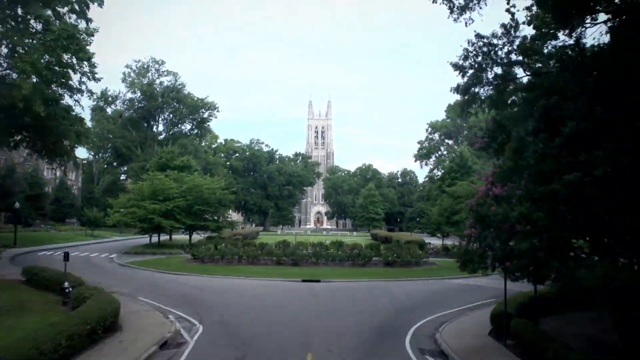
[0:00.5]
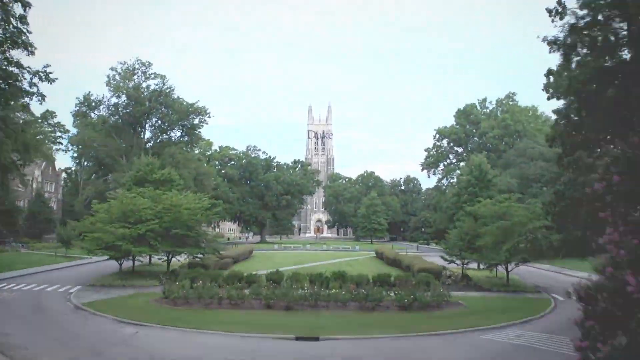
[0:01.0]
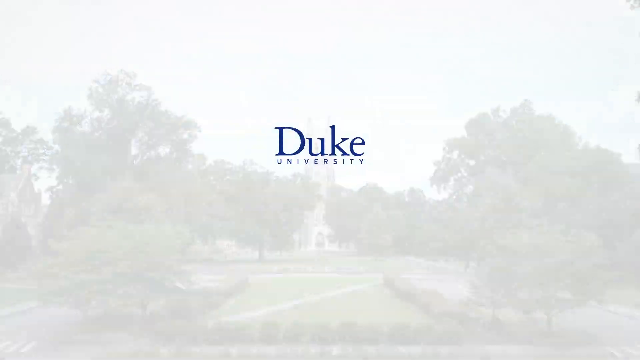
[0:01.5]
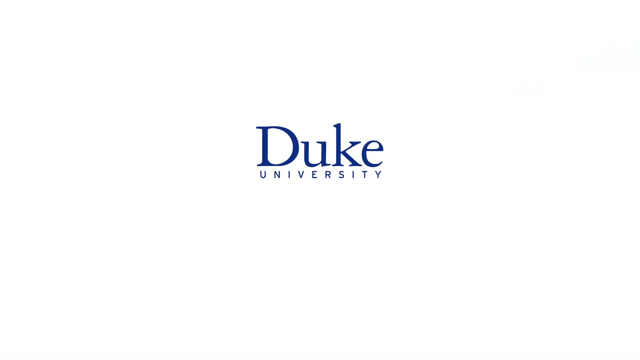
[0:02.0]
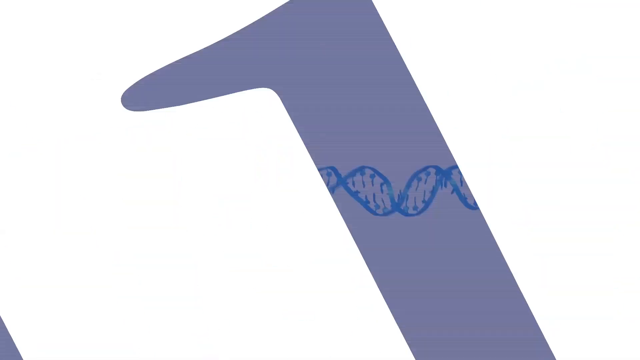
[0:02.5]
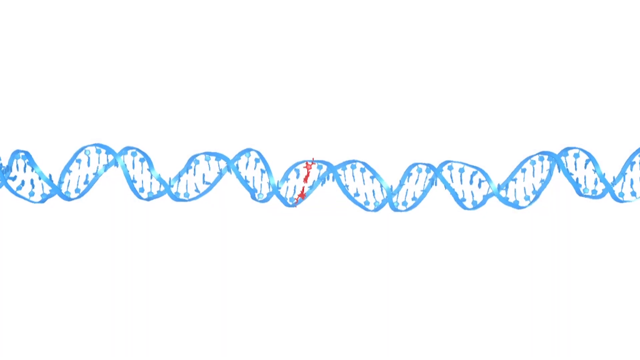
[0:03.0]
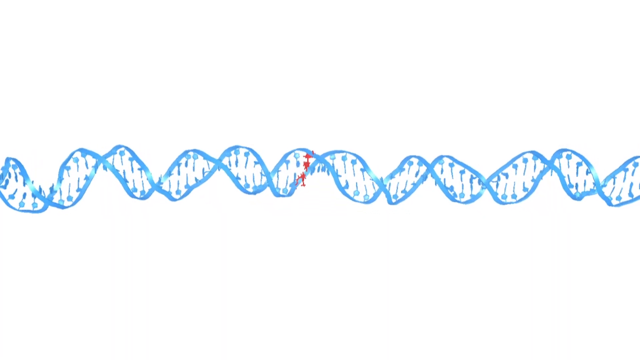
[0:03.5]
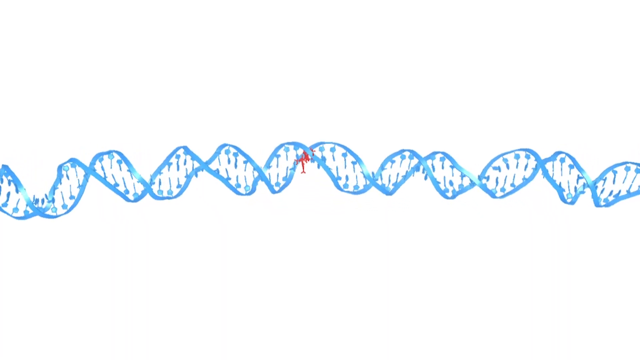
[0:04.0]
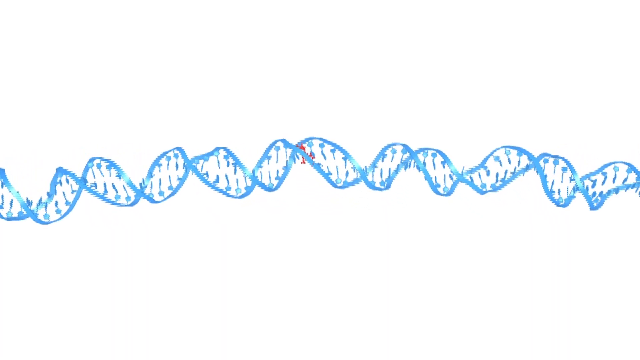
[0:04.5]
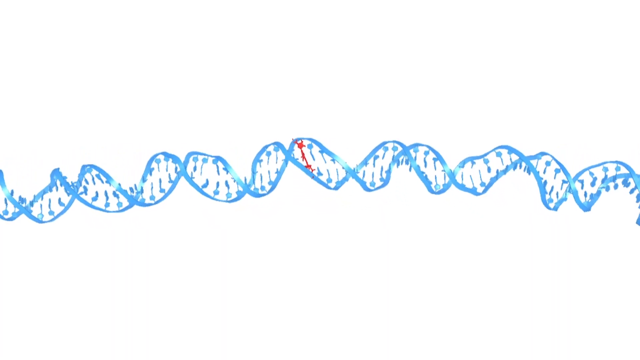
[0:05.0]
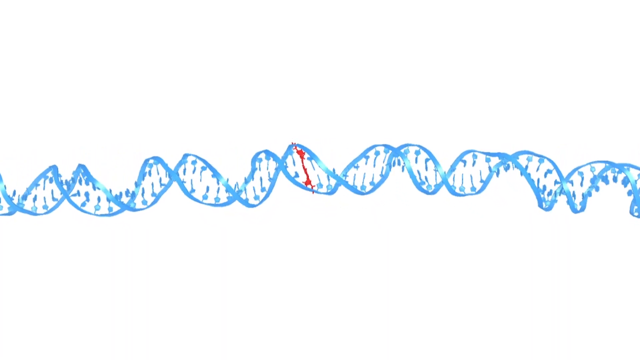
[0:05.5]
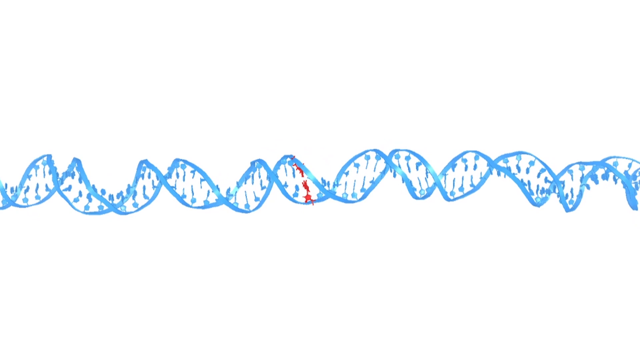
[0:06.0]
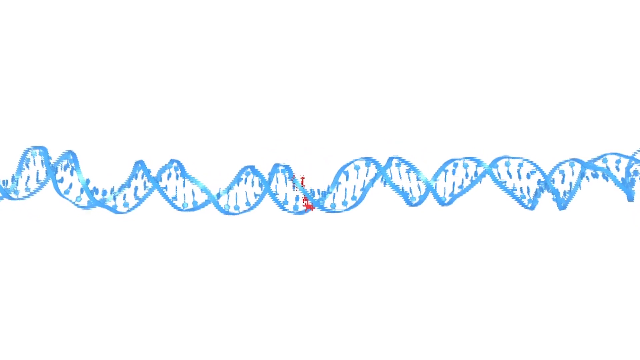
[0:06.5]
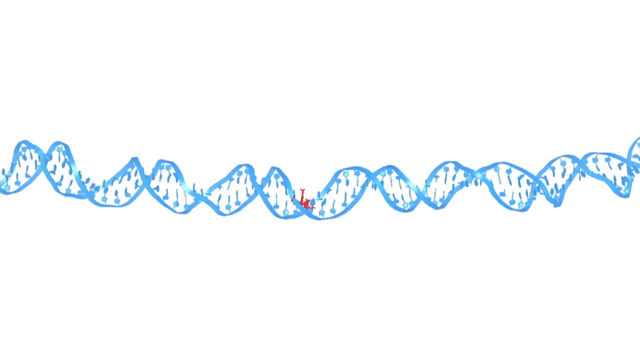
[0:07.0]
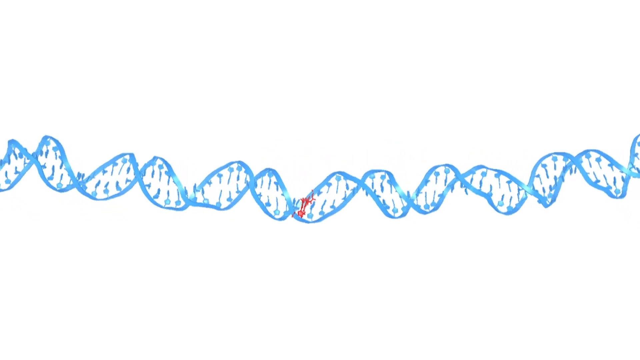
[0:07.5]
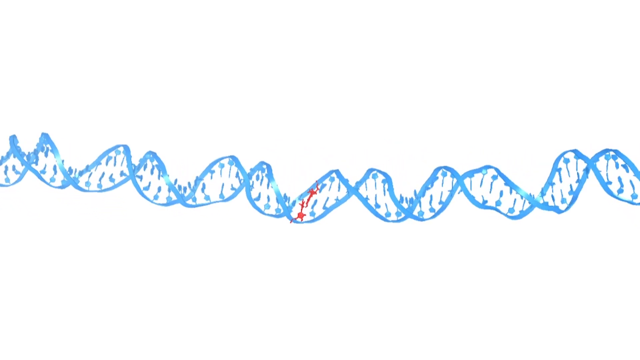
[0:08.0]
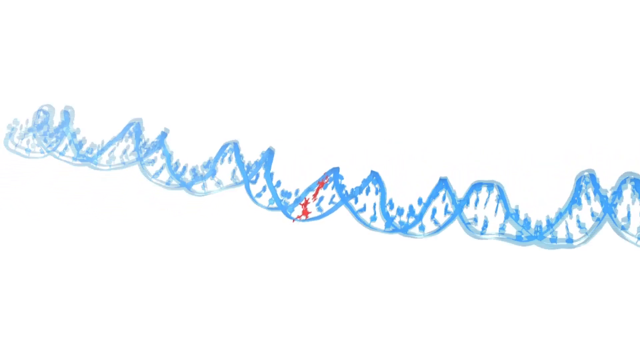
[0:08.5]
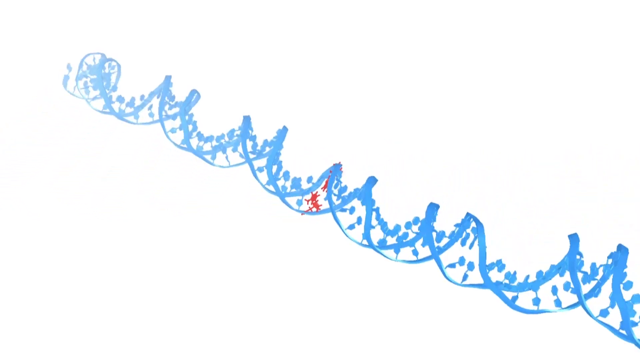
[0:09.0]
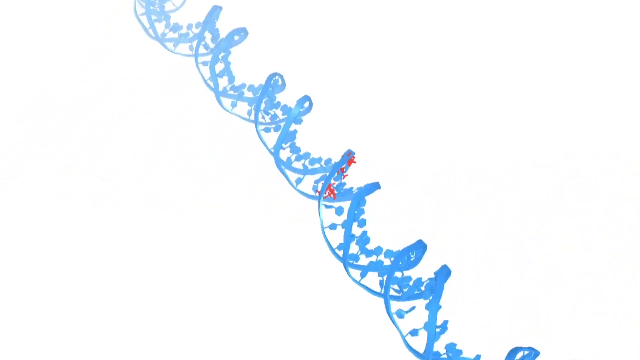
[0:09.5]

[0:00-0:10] A fly-through of a university is shown, with the text "Duke University" on screen. A DNA strand drawn in blue is shown horizontally and circulating, and in the middle there is a red piece of the strand that is different from the blue part. The university has white walls, almost shaped like a castle, with plenty of trees around it as well as in front of it. The driveway forms a circle at the entrance, and inside this circle there is green grass, two pathways and plenty of planted trees.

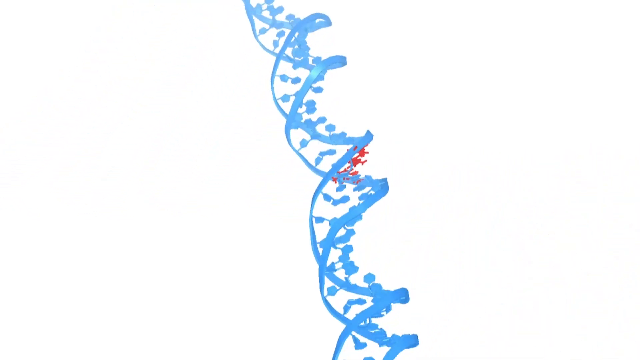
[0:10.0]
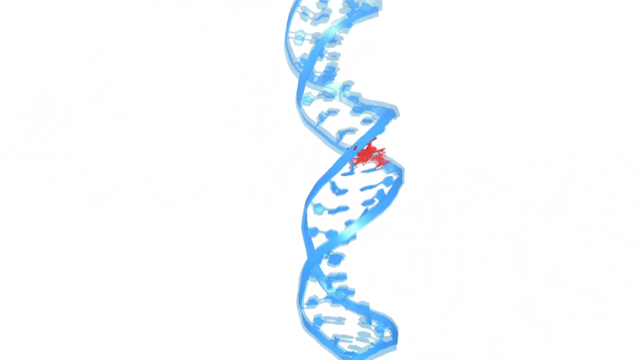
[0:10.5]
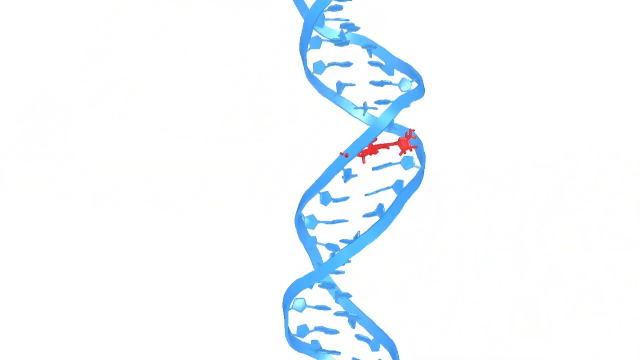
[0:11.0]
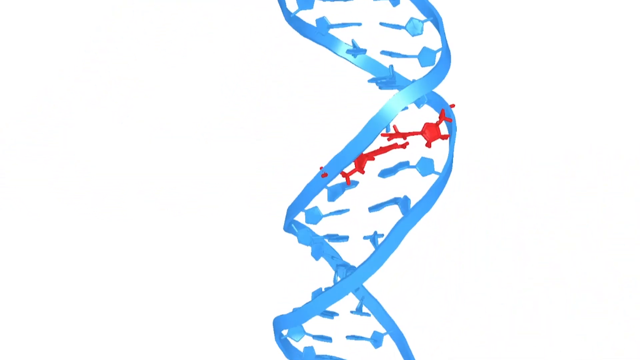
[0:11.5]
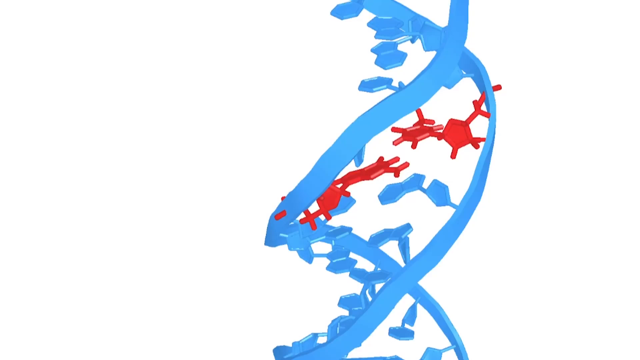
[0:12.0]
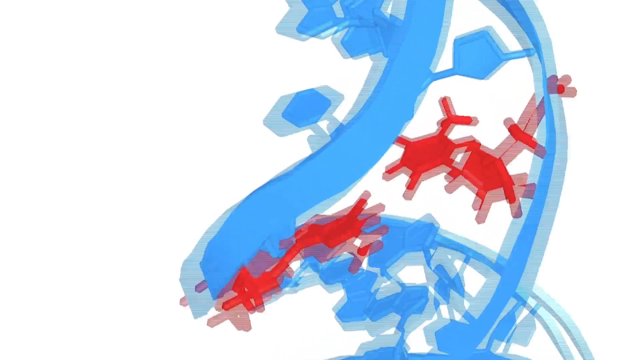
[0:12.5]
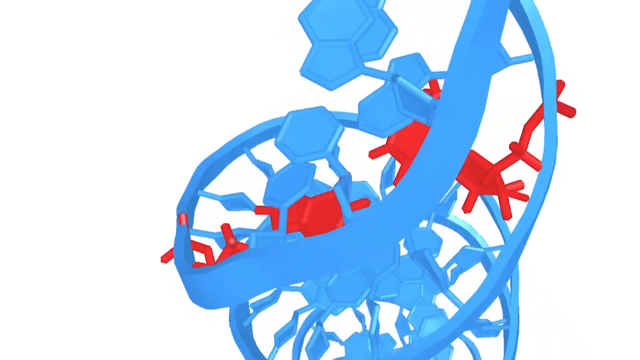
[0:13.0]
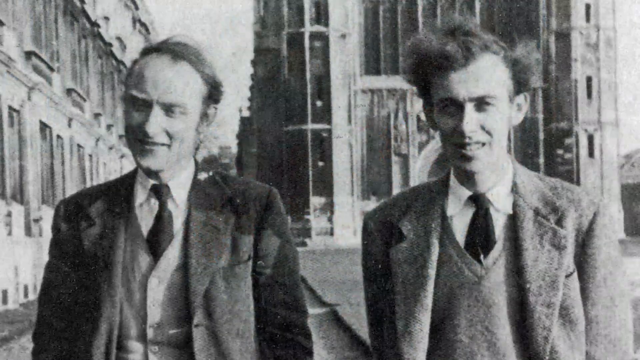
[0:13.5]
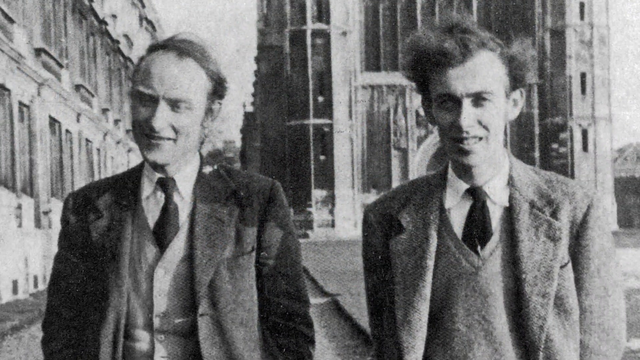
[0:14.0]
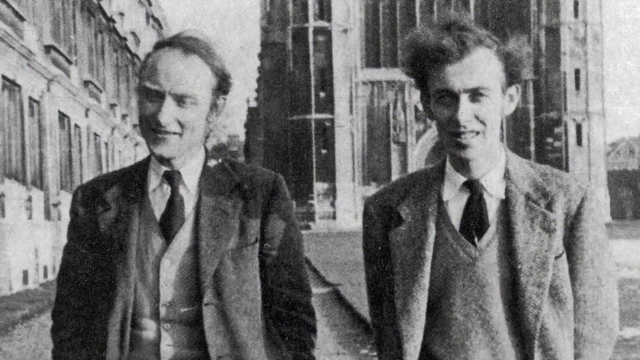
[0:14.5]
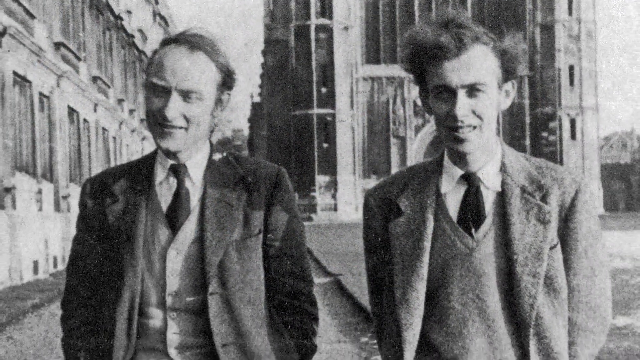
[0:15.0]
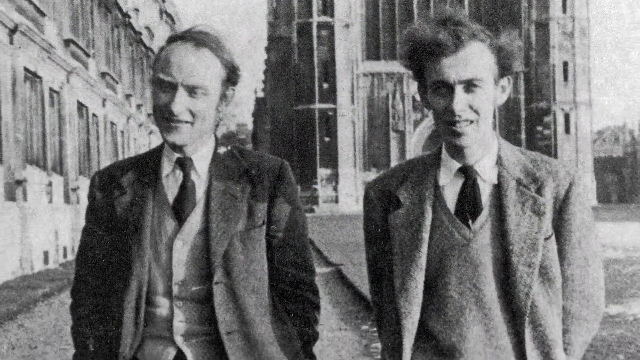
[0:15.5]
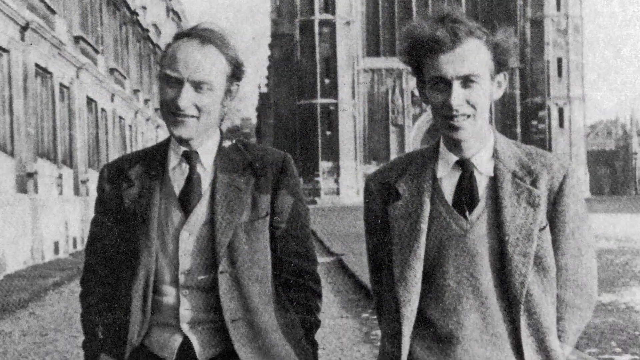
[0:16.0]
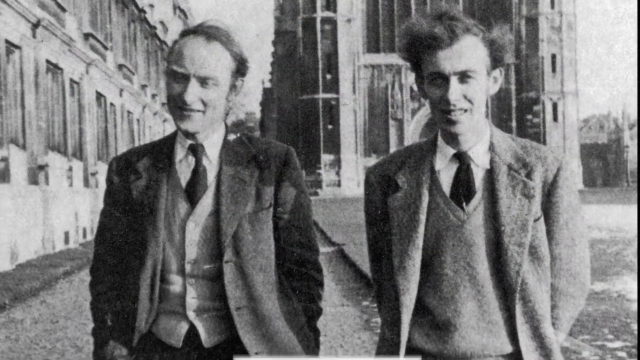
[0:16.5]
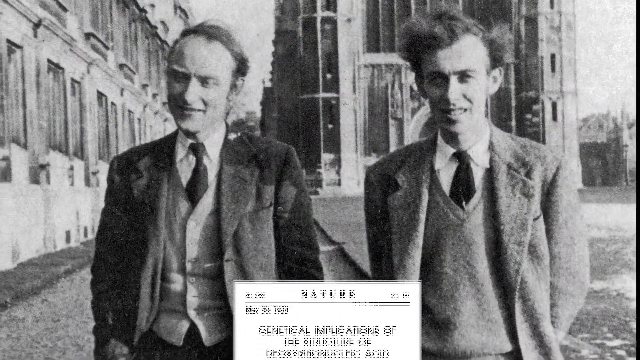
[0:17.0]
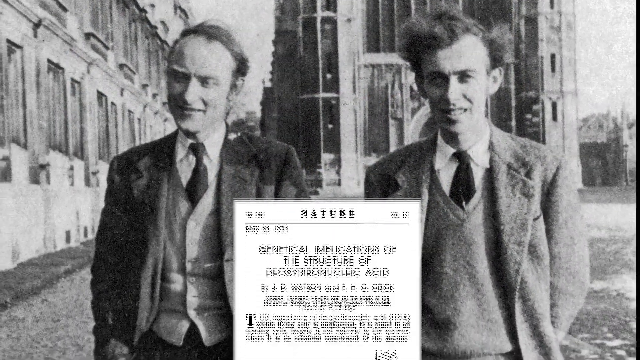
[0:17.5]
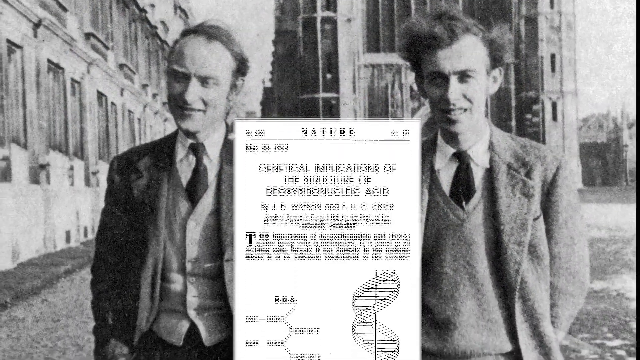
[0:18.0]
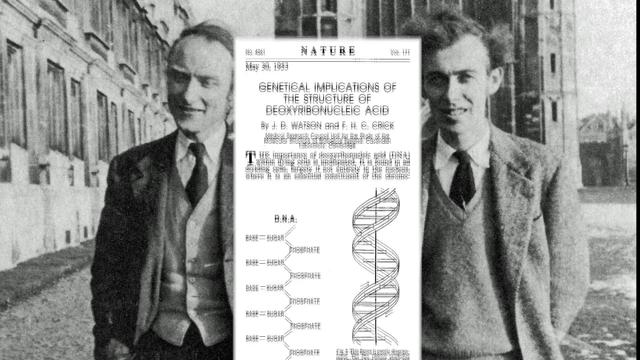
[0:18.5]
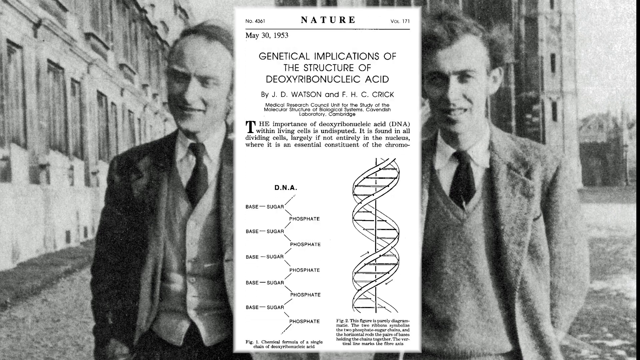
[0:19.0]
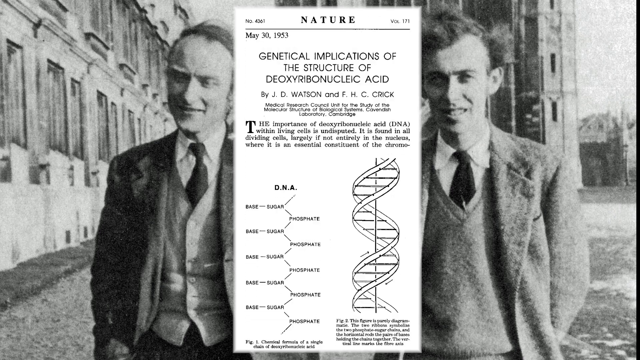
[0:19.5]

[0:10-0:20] The DNA strand is now shown vertically, and the video zooms in on its red parts, which are different from the blue strand. Then a black-and-white image shows two men from the 90s wearing different suits: the one on the left wears a slightly blacker suit, the one on the right a suit that is not black, and both wear black ties. Behind them are different buildings from the past. Text comes out of the middle and reads "Nature, May 30, 1953, Genetical Implications of the Structure of Deoxyribonucleic Acid by J.D. Watson and F.H.C. Crick. The importance of deoxyribonucleic acid DNA within living cells is undisputed, it is found in all dividing cells". The DNA strand and its bases are shown.